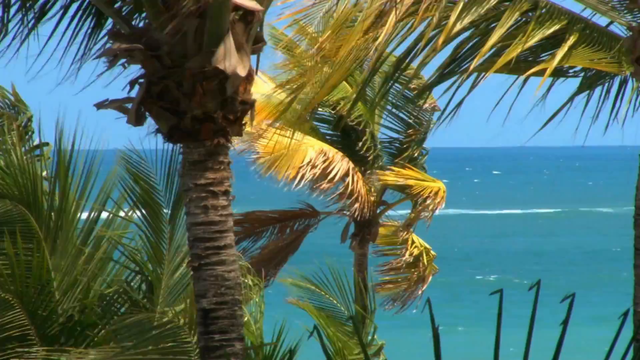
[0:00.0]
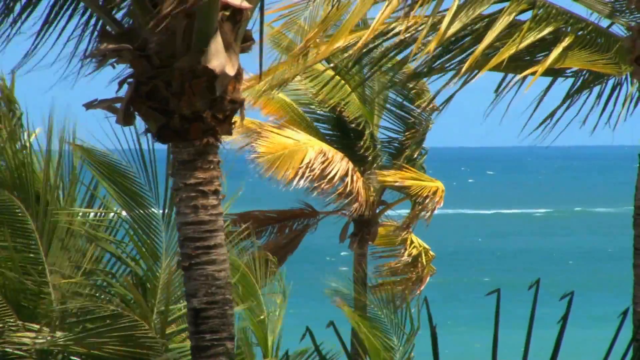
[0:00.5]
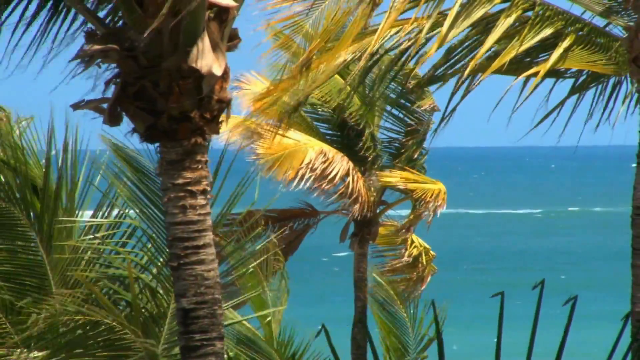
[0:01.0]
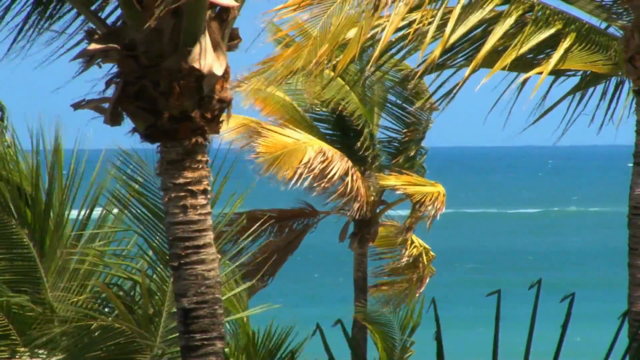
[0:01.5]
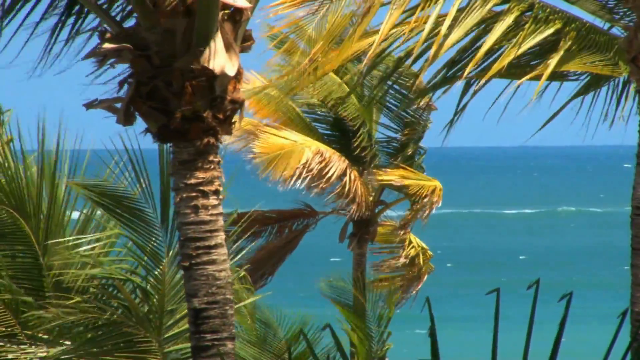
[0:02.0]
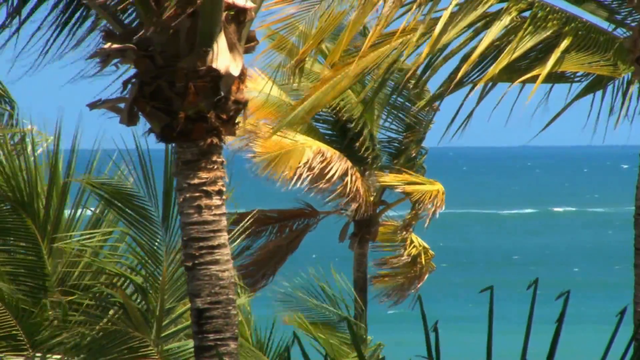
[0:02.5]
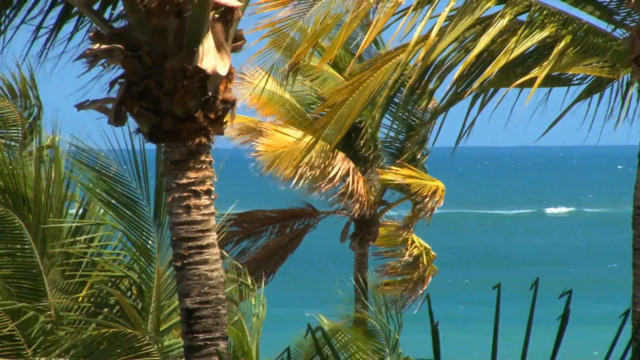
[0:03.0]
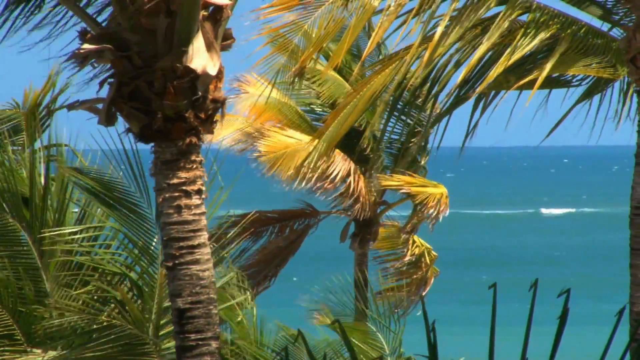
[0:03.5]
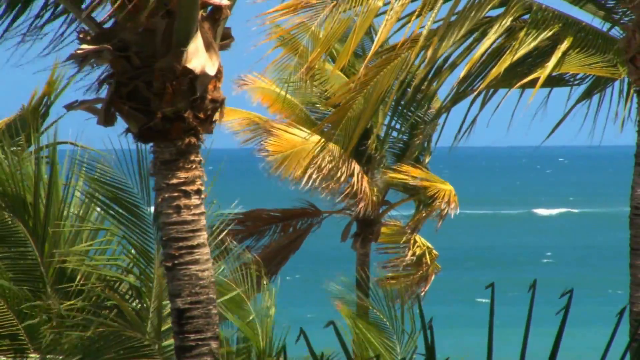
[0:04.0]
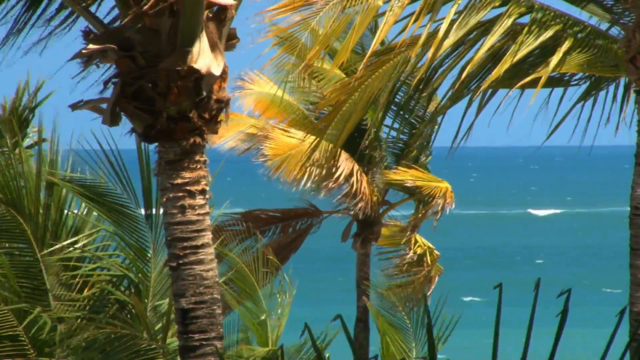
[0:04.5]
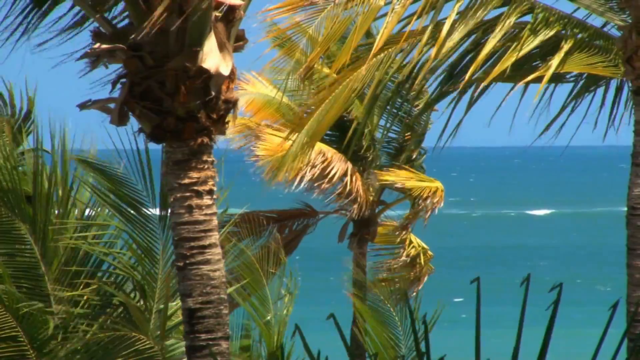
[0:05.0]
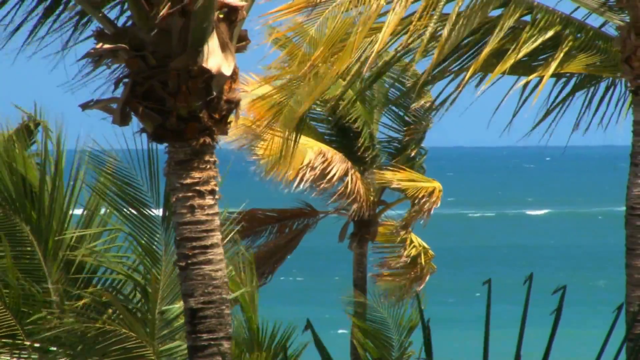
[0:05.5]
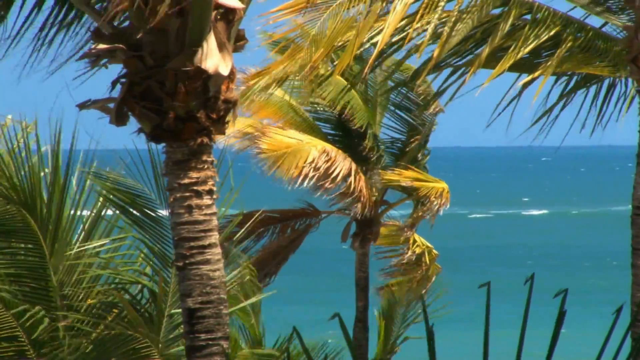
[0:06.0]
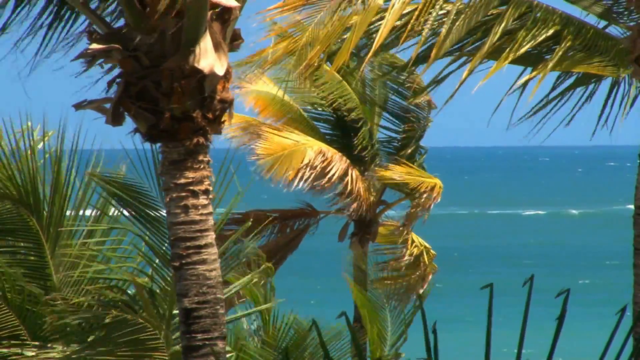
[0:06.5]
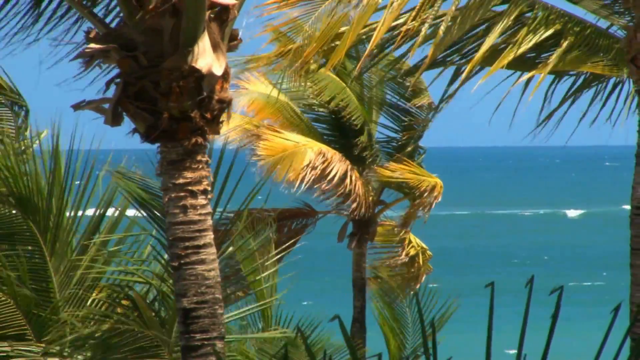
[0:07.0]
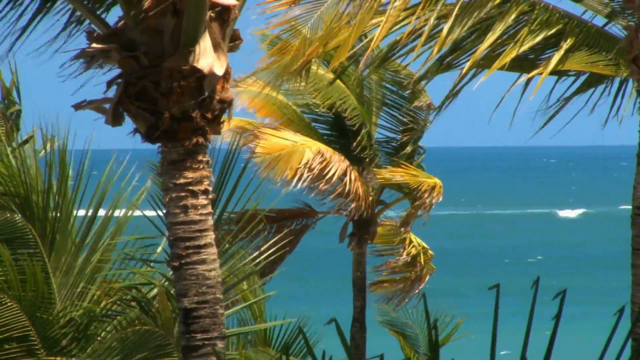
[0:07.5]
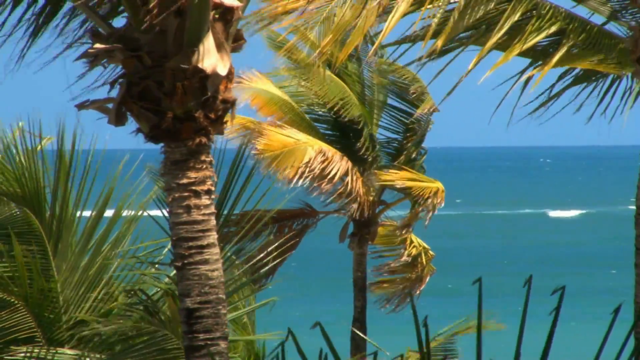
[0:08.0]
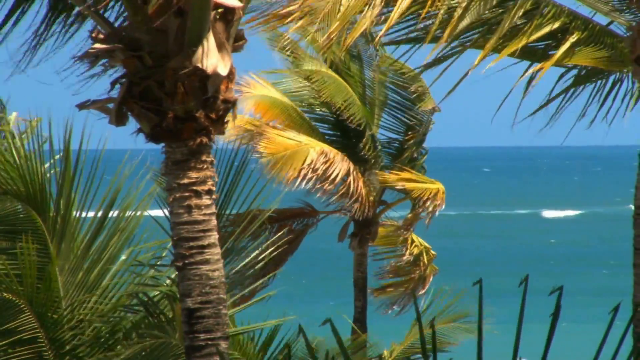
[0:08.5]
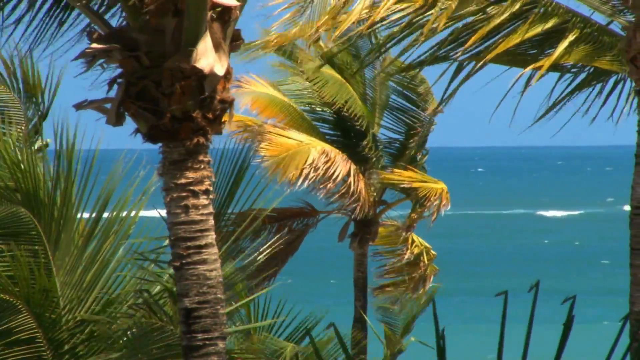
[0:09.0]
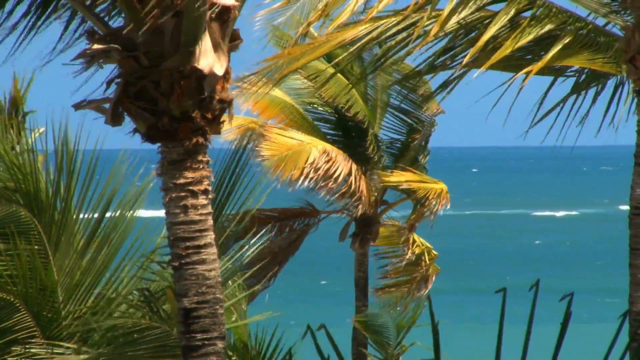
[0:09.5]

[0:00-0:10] A huge scene shows trees swaying in the breeze, seen up close, with small waves crashing in the distance. The wind is fairly strong: the trees sway and the leaves blow to the left. The shot stays focused on this close-up scene and the scenery does not change. It appears to be a tropical or beach-resort-style setting. It is a sunny day with blue skies in the background, and there are no people or animals in view.